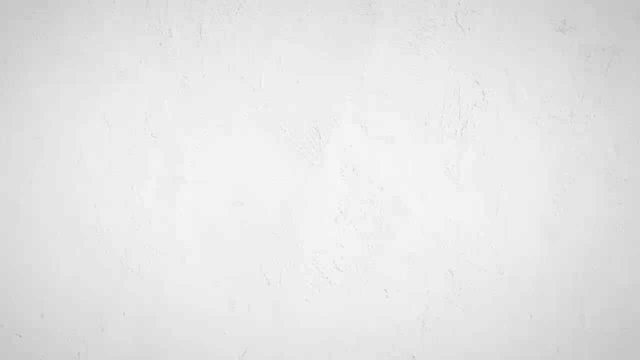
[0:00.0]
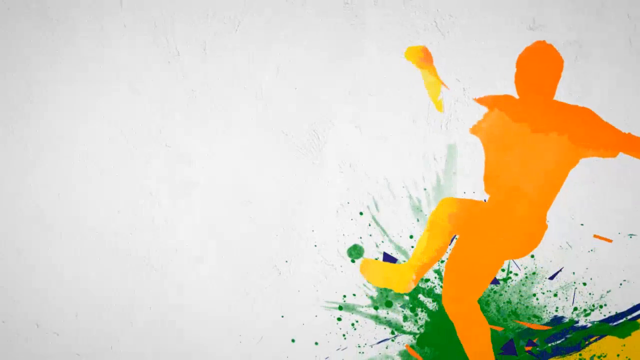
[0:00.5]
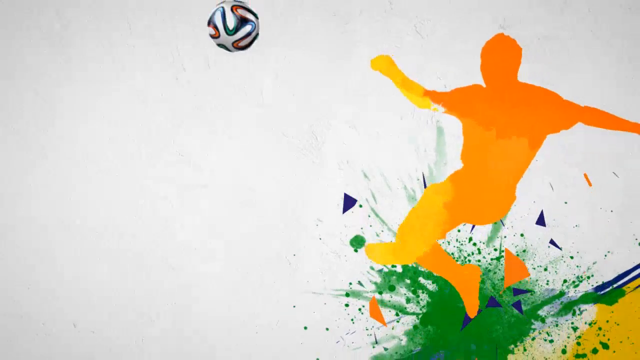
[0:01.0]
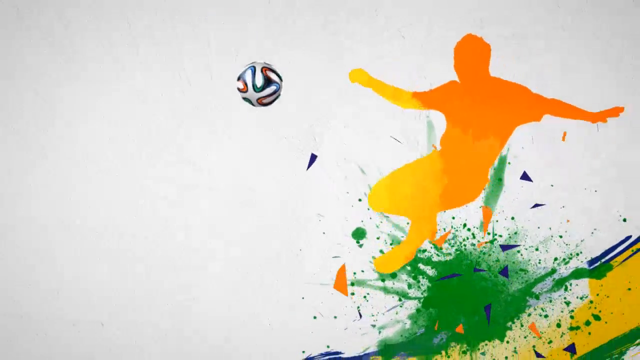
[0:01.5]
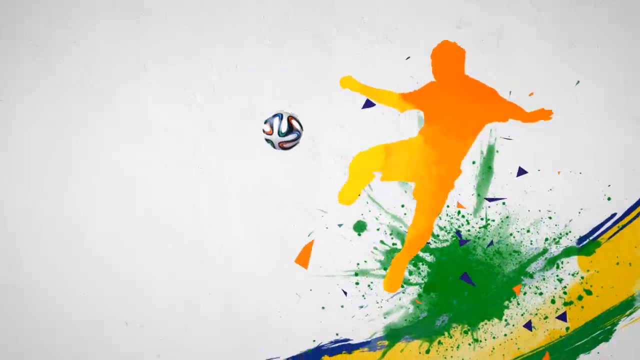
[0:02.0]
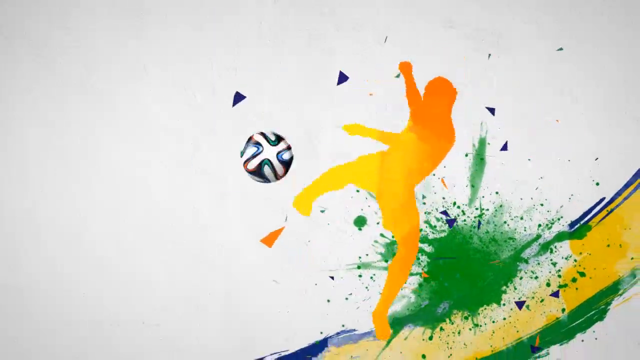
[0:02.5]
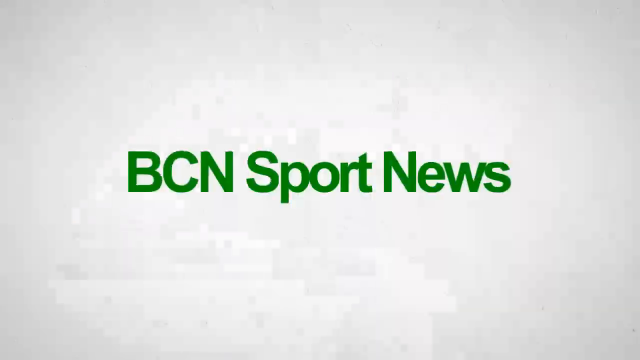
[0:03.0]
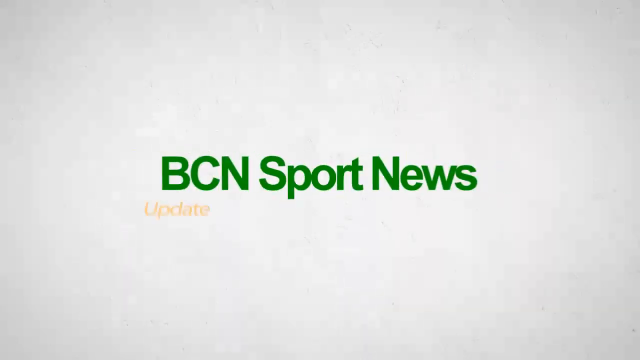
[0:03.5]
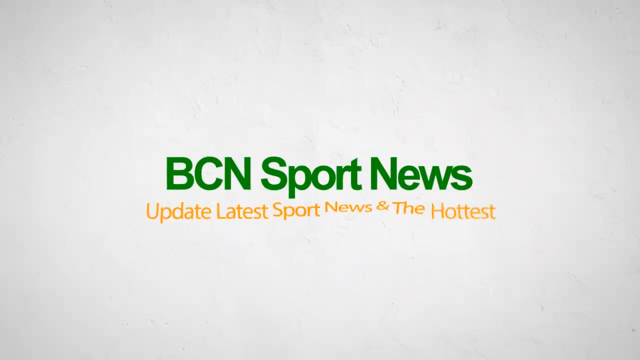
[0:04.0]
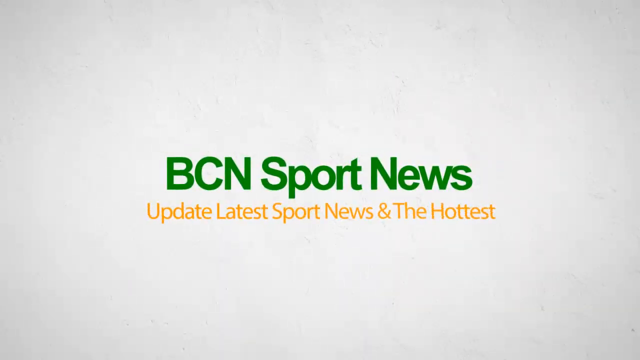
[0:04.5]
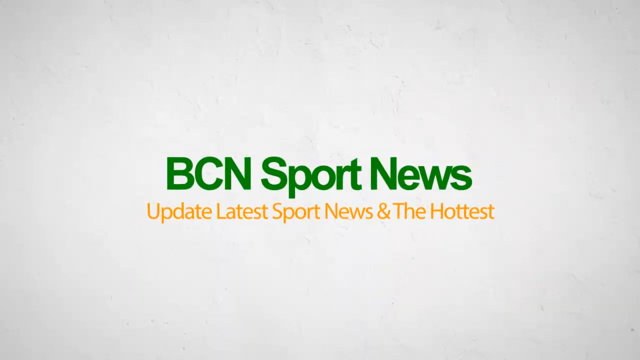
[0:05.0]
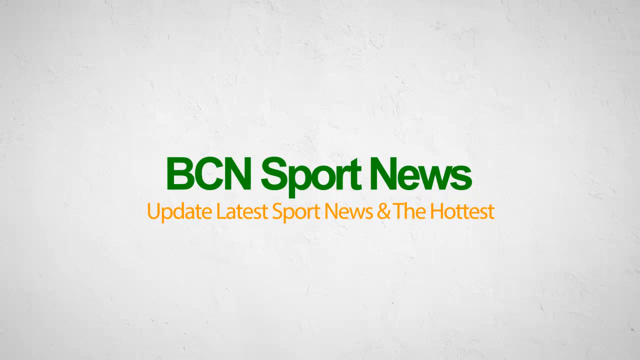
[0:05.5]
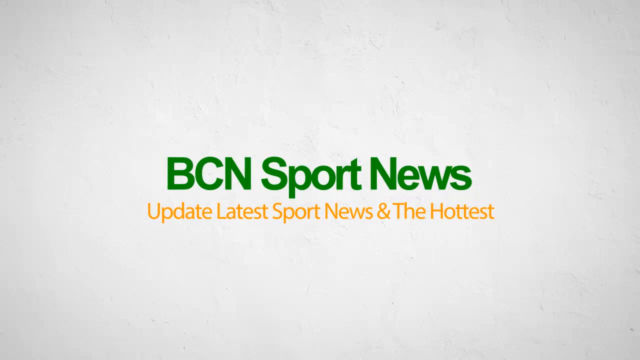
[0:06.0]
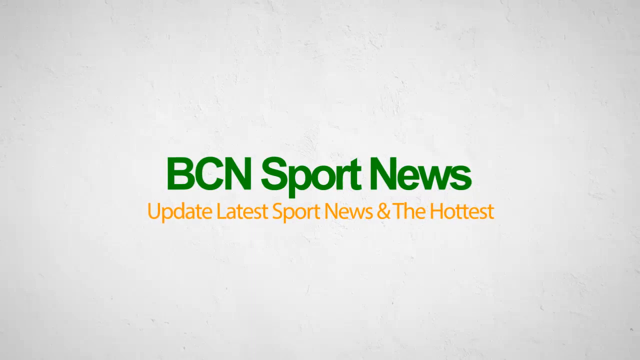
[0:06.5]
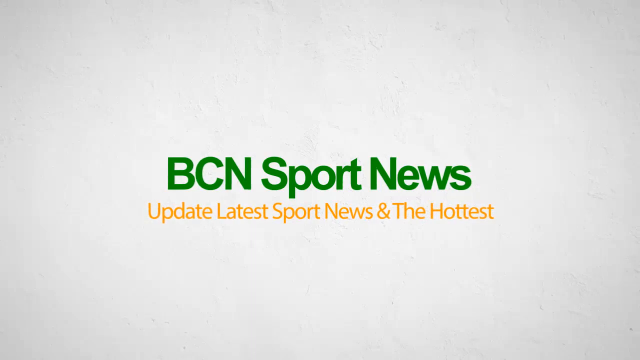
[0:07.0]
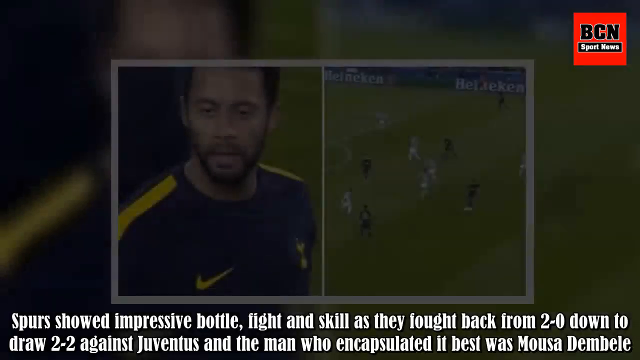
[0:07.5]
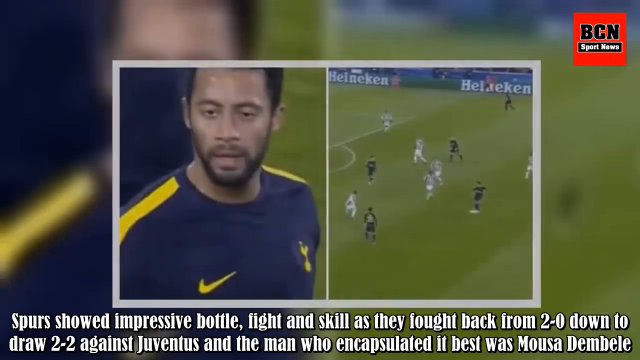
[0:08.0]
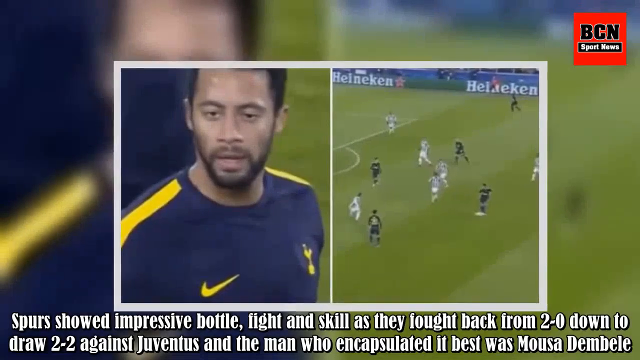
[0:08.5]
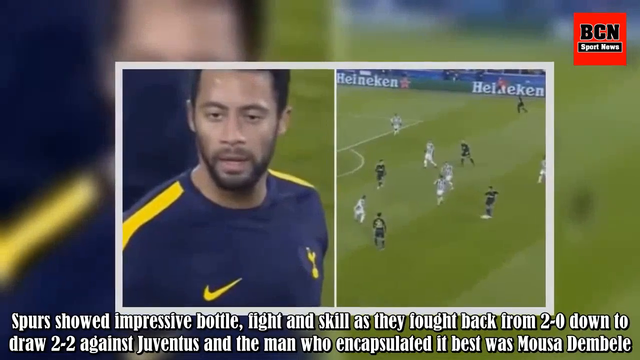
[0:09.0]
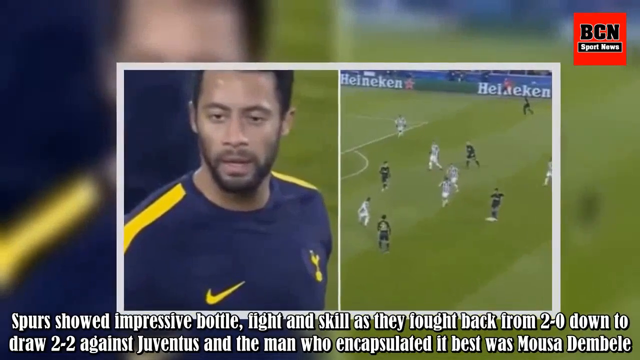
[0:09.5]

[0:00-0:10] The video opens with a BCN Sports intro showing a cartoon figure, like a paint cartoon, kicking a soccer ball, with the text "update the latest." Text then describes the Spurs fighting back from two down to draw 2-2 against Juventus, ending "the man who encapsulated it best was Moussa Dembele." There are two pictures: the first is probably Moussa Dembele, wearing a blue uniform with a little yellow on it, and the next picture shows a soccer player, probably from his team.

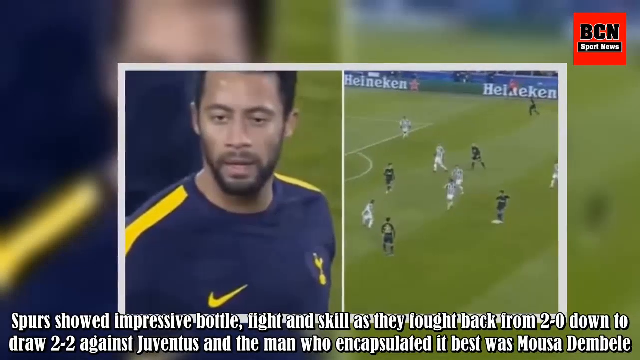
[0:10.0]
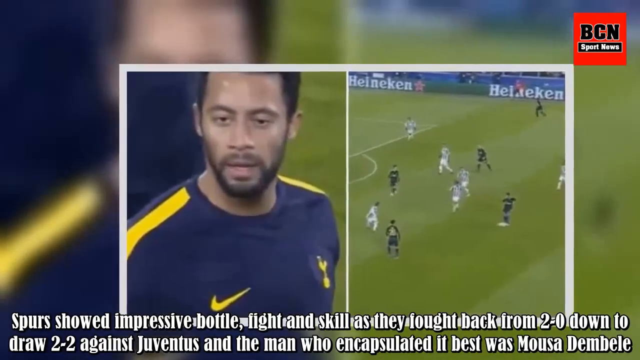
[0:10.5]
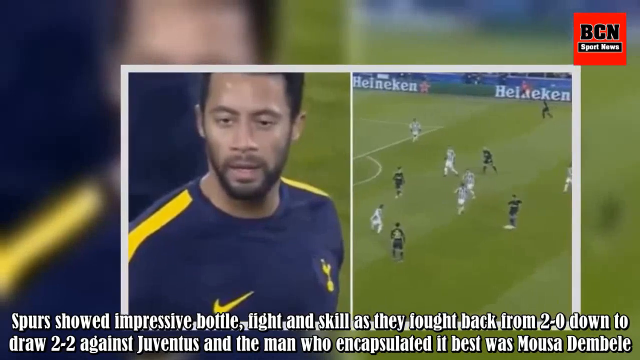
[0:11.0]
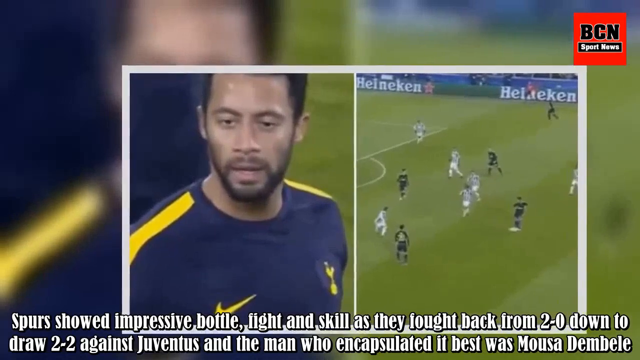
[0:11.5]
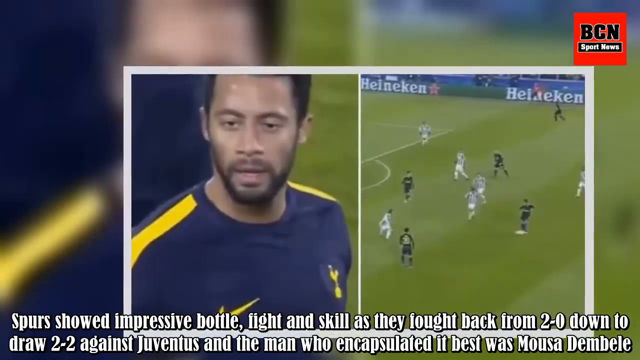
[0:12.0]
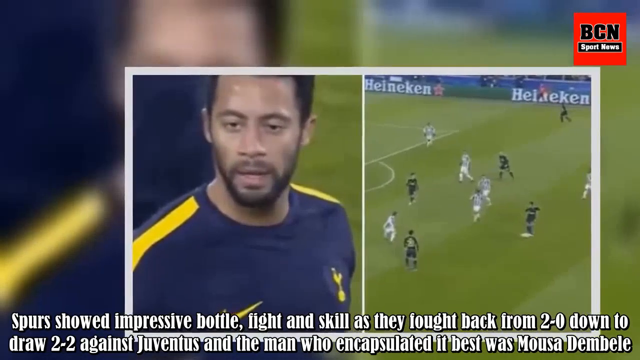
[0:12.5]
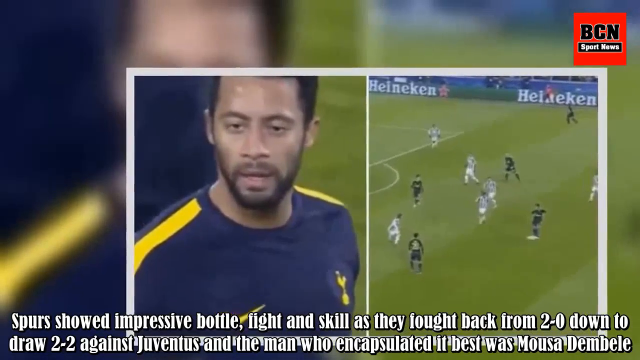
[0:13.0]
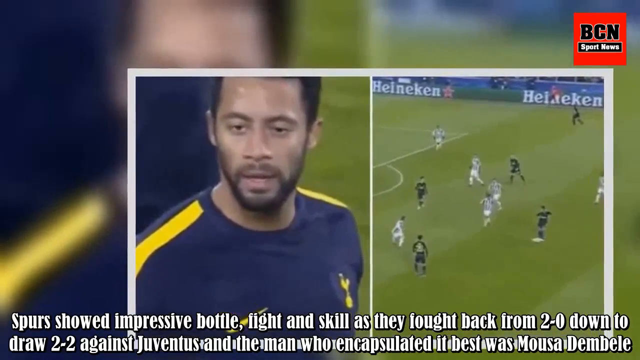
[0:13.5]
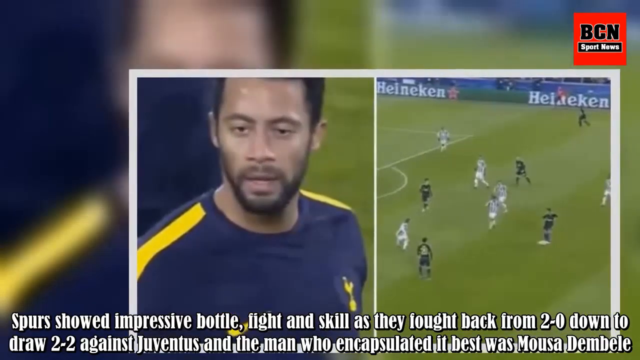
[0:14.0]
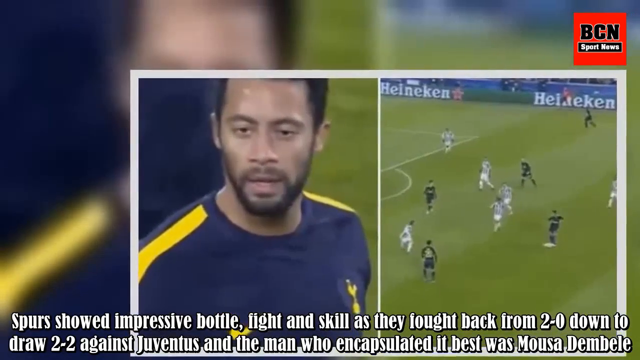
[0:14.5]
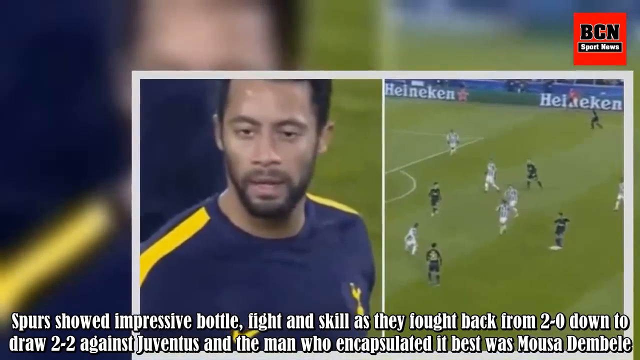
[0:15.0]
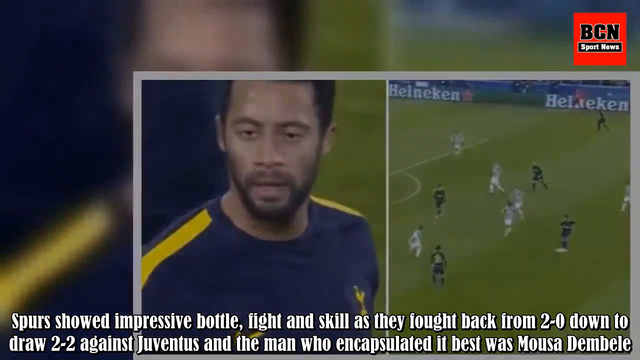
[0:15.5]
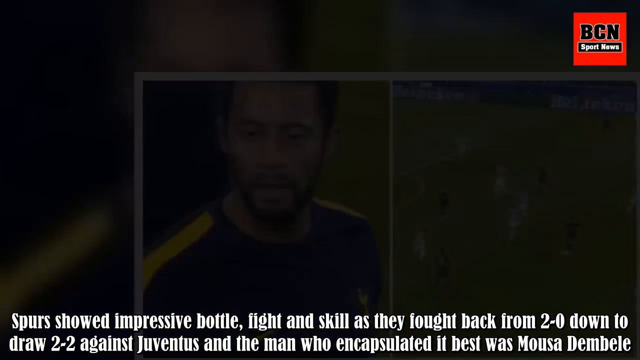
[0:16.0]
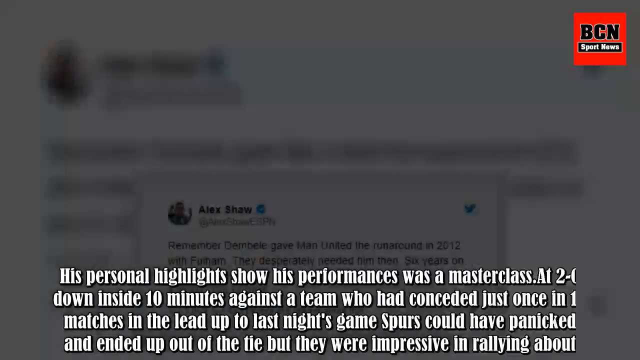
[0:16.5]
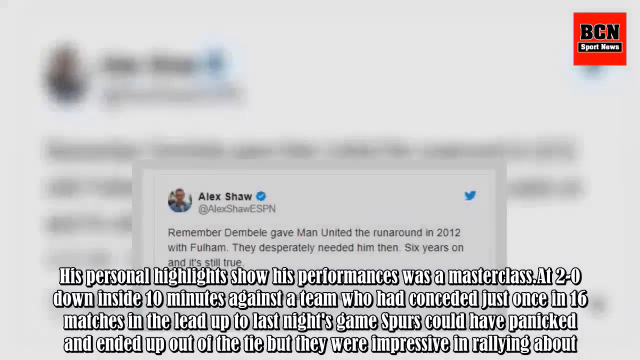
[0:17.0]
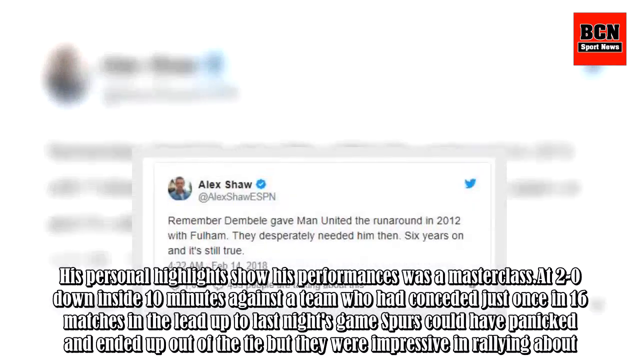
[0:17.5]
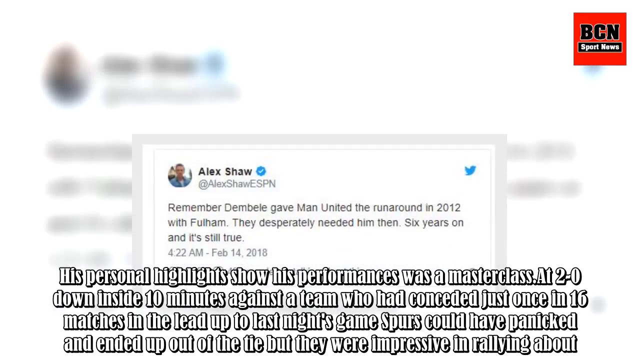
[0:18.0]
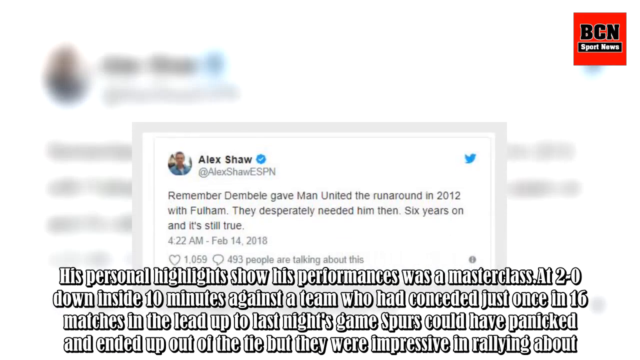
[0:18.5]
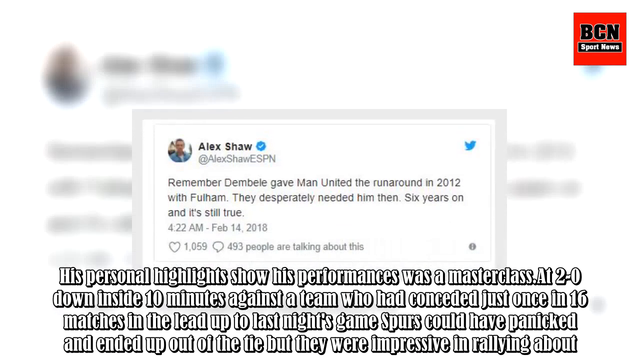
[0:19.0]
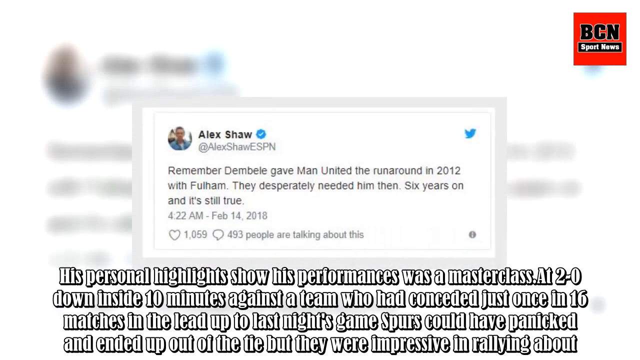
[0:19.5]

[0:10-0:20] A picture of Moussa Dembele is shown, followed by a picture of what are probably the two teams playing. Text reads that his personal highlights show his performance "was masterclass at two to zero down inside 10 minutes against a team who had conceded just once in 16 matches in the lead up to last night's game Spurs could have panicked and ended up out of the tie, but they were impressive in rallying." A post from Alex Shaw says "remember he gave Man United the runaround in 2012. They desperately needed him then six years on," and it is dated February 2018.